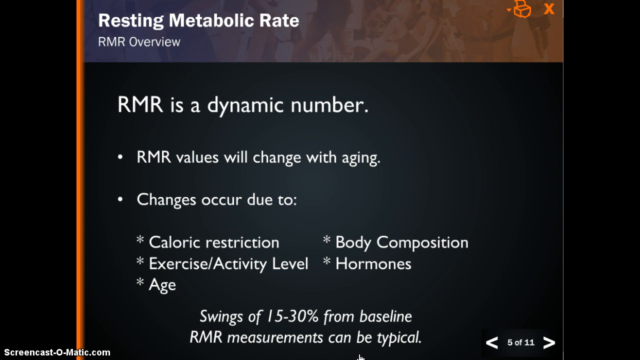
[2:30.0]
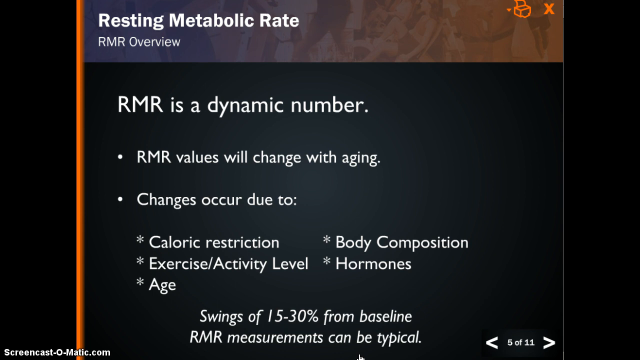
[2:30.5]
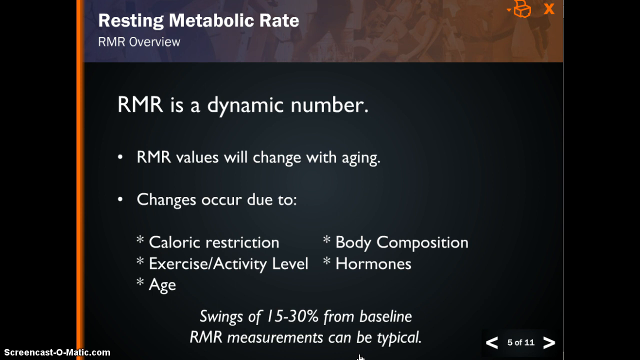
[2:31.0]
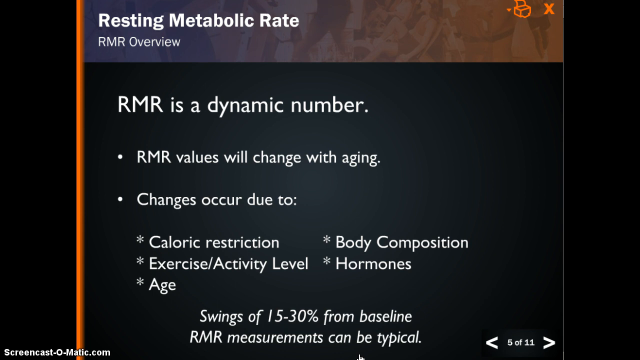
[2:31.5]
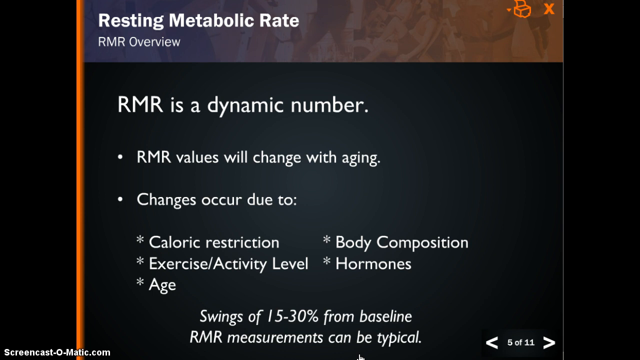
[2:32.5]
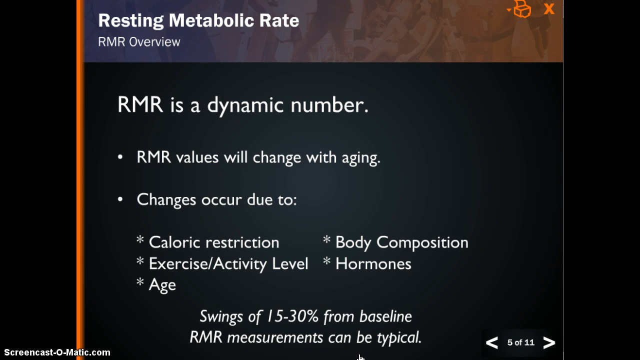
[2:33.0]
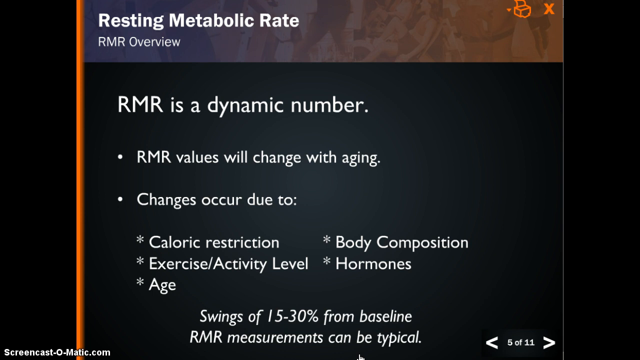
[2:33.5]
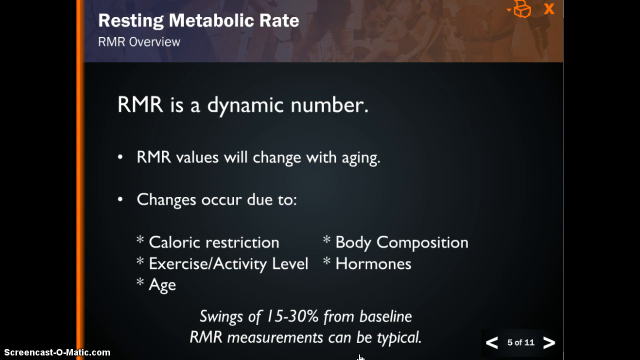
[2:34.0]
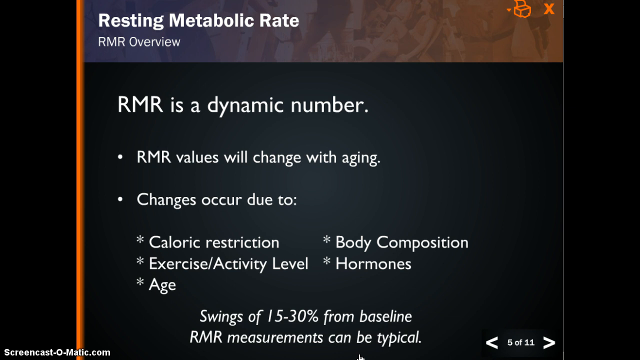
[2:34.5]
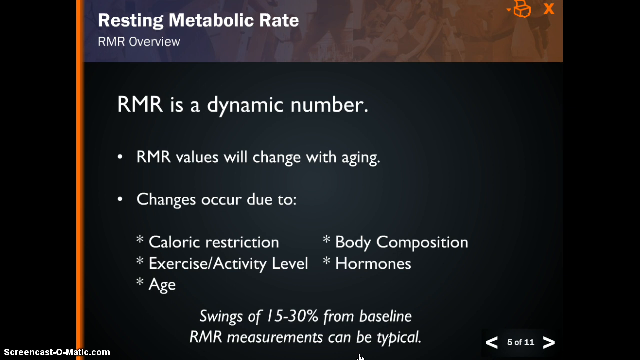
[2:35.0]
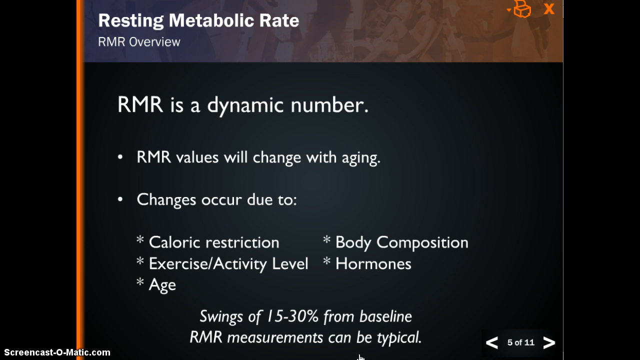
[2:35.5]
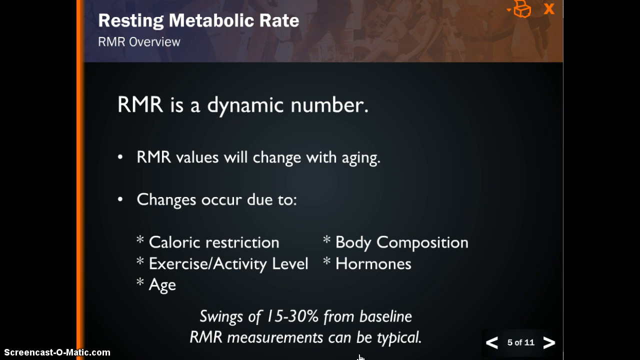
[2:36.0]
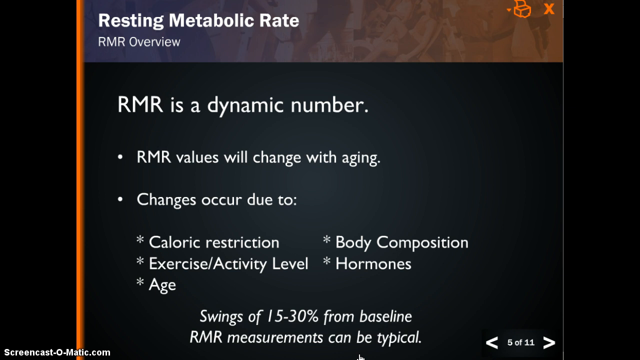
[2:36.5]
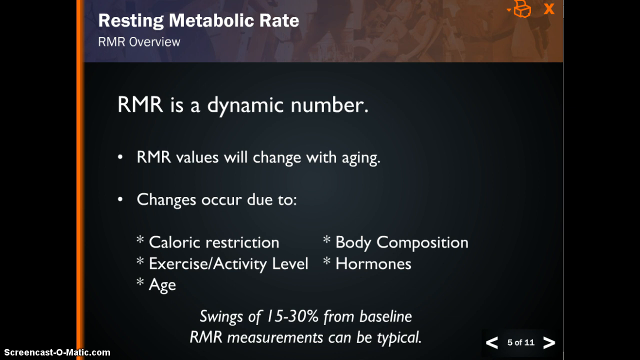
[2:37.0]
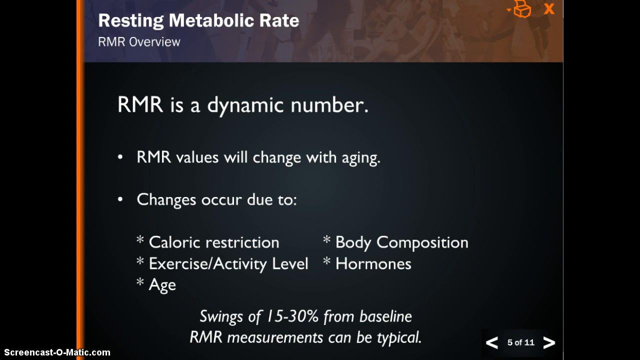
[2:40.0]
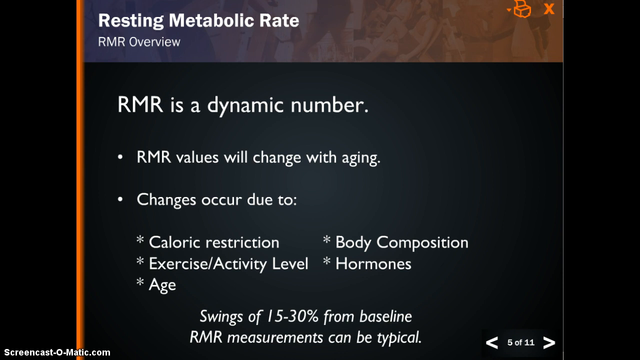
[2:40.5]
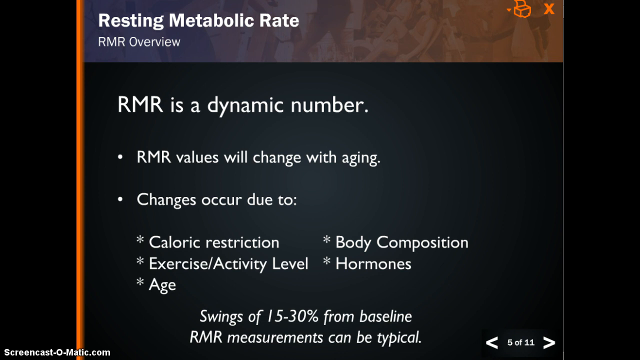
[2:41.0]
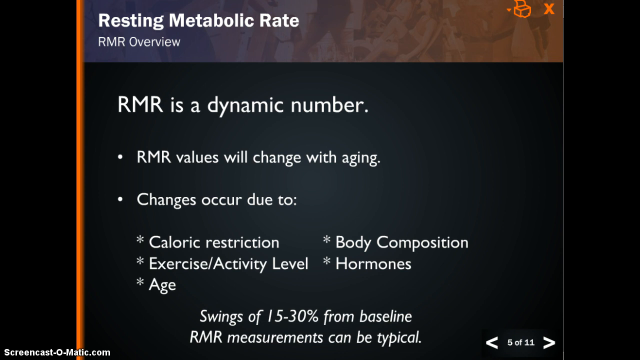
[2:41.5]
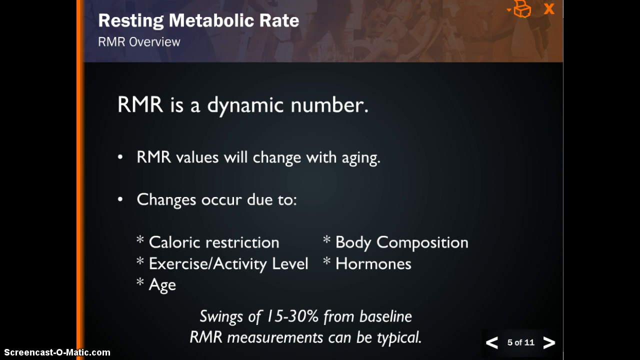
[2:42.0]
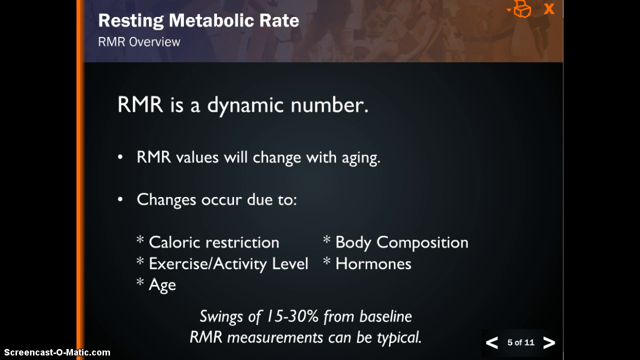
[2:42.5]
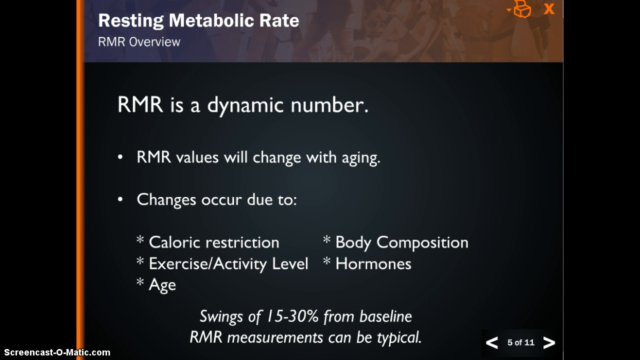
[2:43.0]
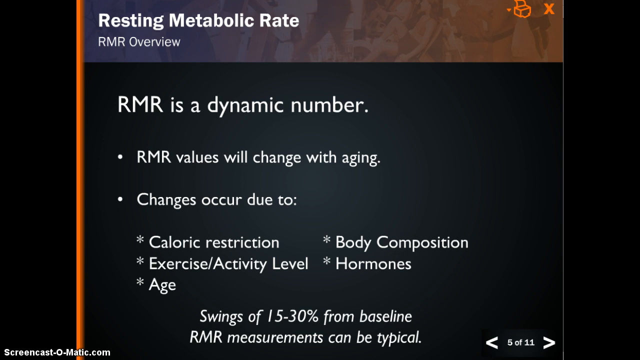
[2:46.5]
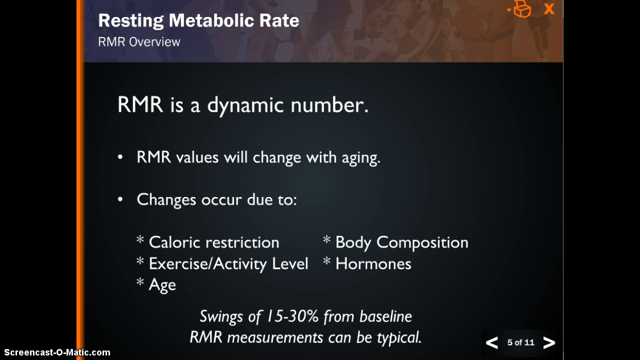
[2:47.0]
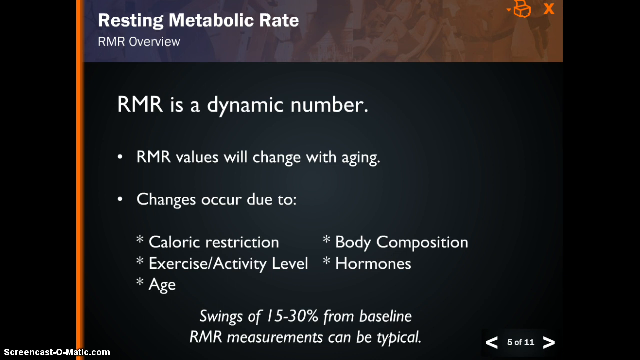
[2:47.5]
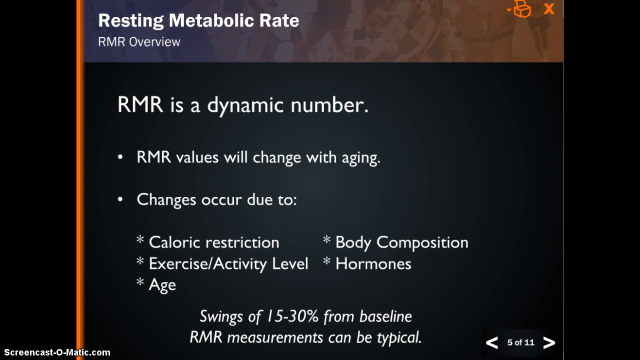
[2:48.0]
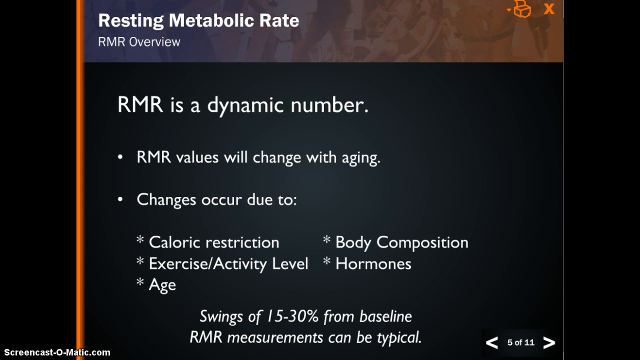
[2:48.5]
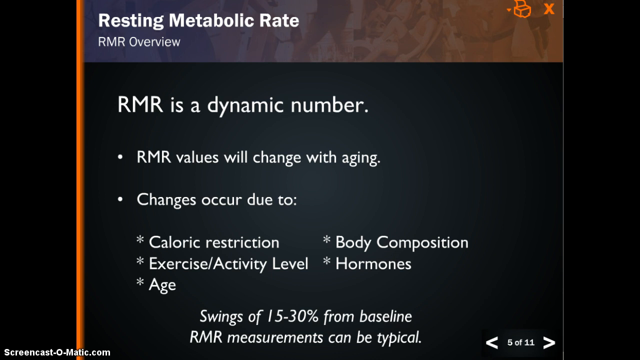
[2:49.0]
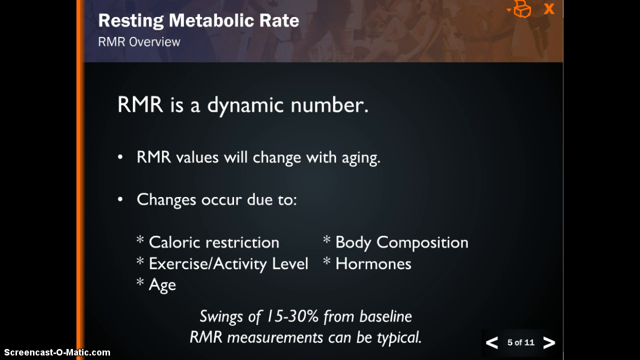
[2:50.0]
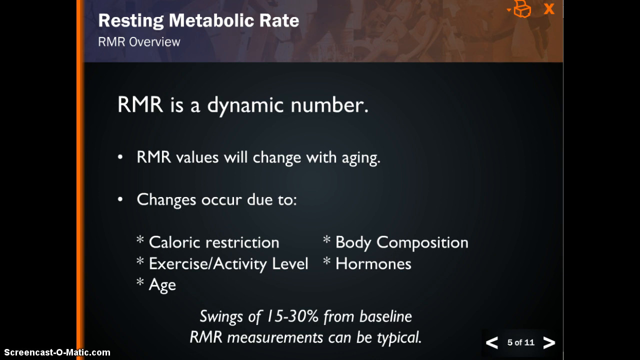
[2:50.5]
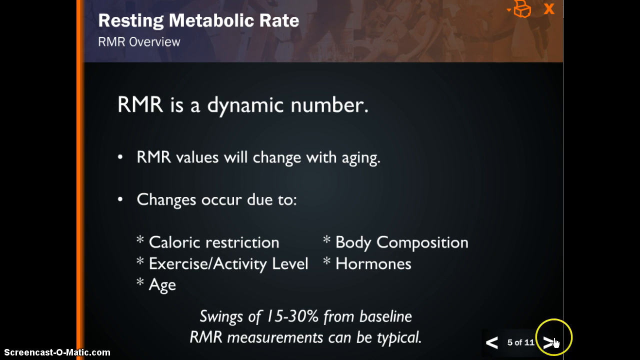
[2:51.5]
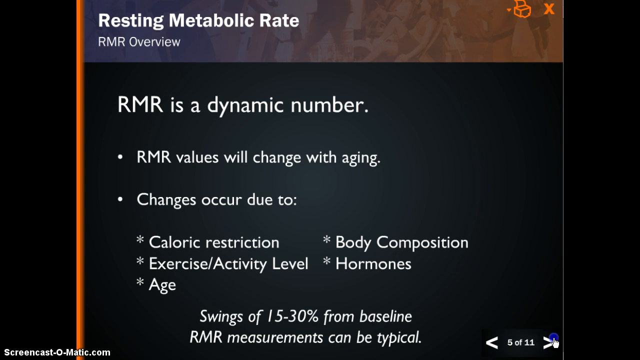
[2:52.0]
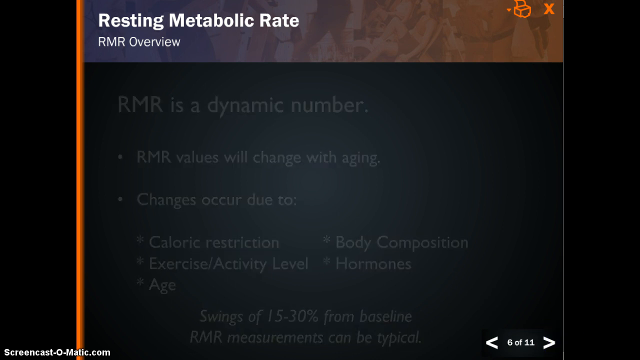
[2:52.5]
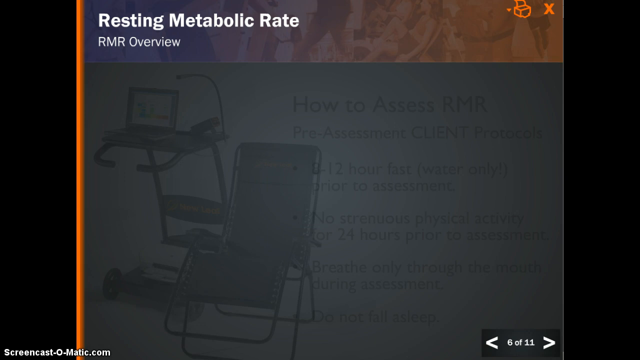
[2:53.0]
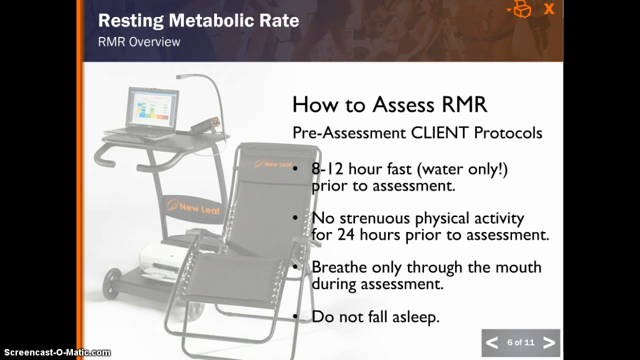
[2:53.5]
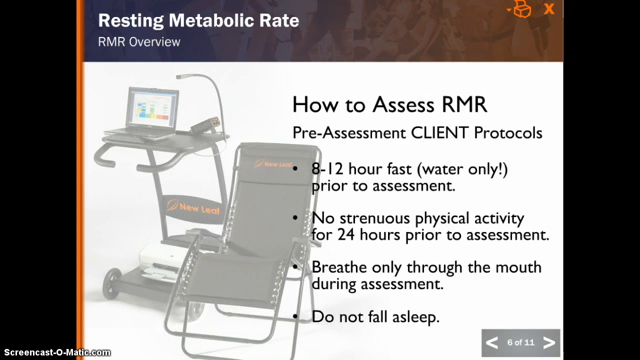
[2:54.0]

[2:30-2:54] In the last four seconds the sixth slide appears, marked "6 of 11". A somewhat faded picture on the left side of the screen shows a testing machine for RMR, with the New Leaf logo, which was shown at the beginning of the video, on top of it. One of the products looks to be a large lawn chair, and the other is a table on wheels with a laptop on top. Four bullet points state that the patient needs to fast 8 to 12 hours prior to the assessment and can only have water during this time, is not allowed any strenuous activities for 24 hours before the test, can only breathe through the mouth during the test, and must not fall asleep.